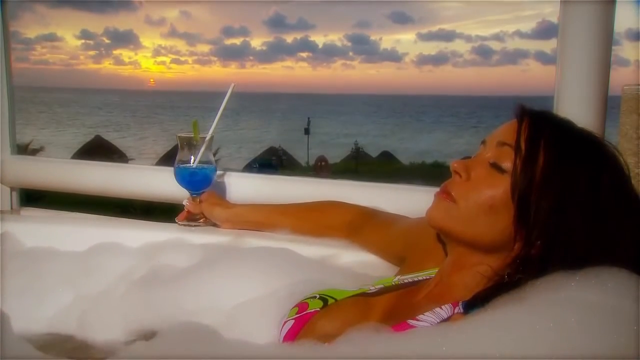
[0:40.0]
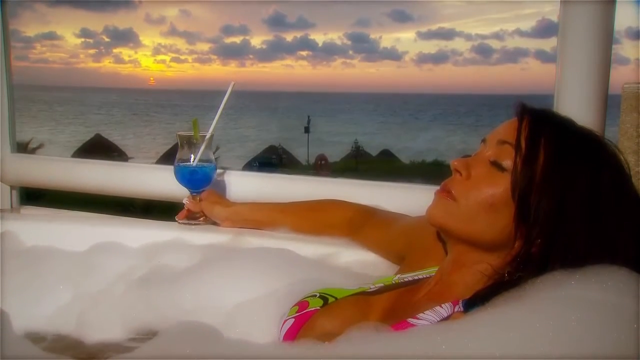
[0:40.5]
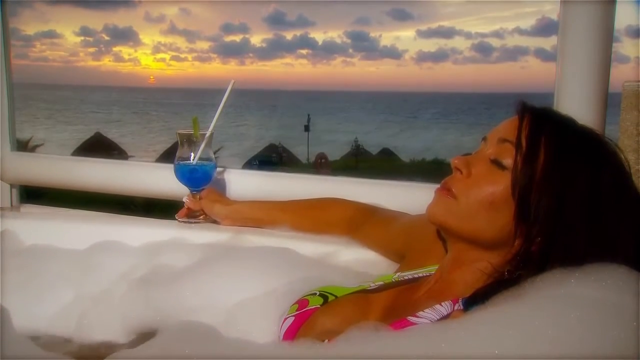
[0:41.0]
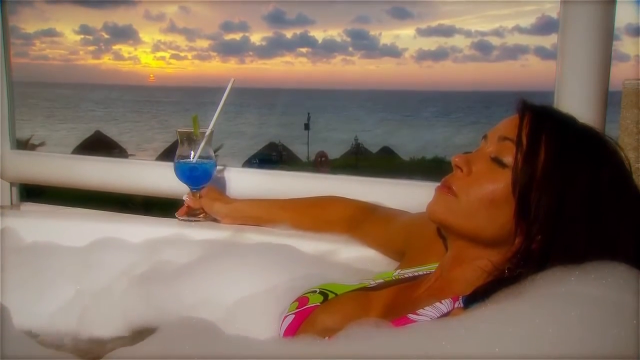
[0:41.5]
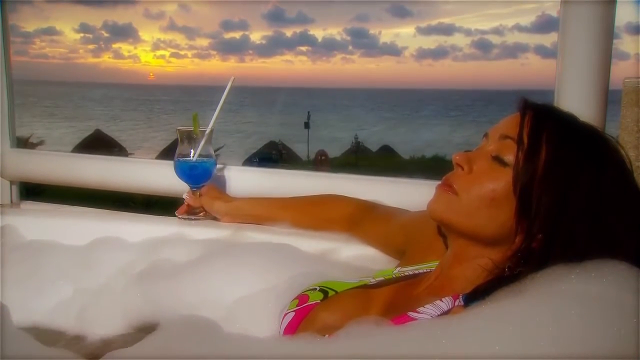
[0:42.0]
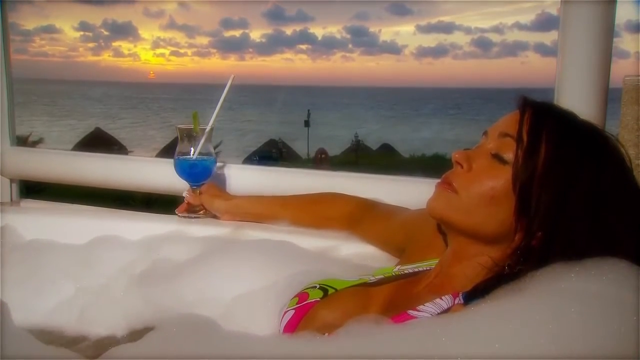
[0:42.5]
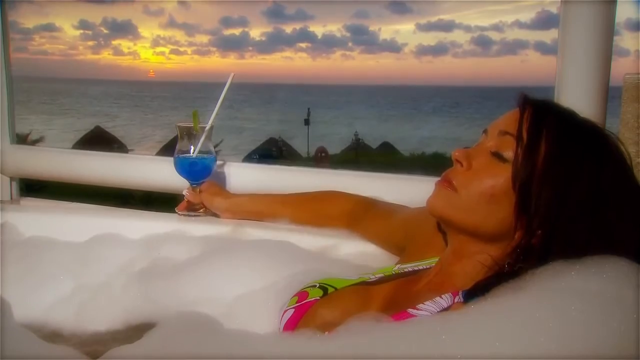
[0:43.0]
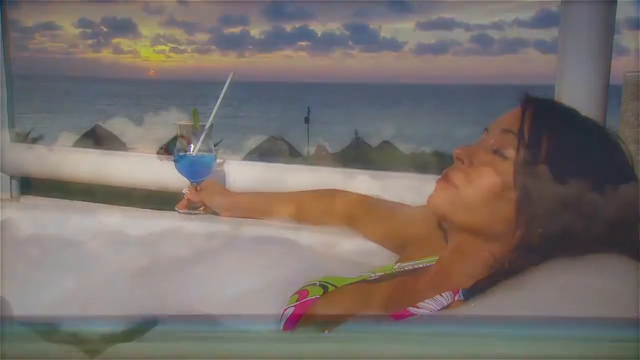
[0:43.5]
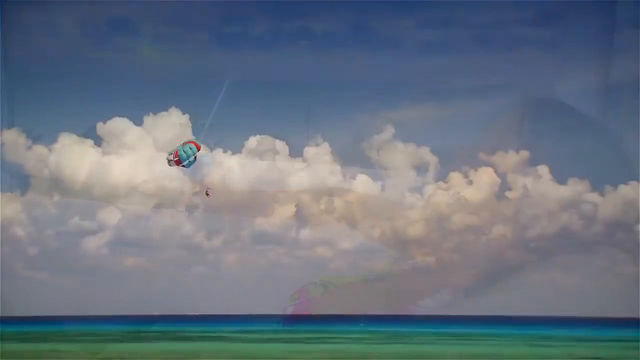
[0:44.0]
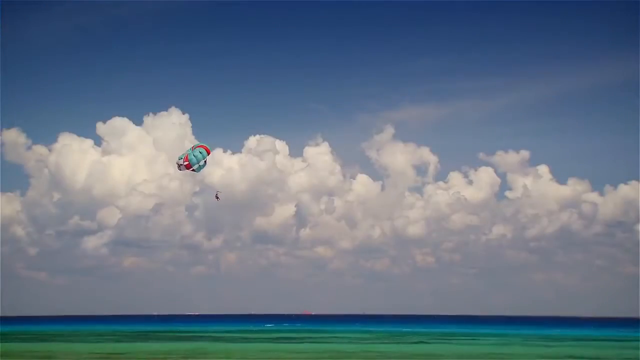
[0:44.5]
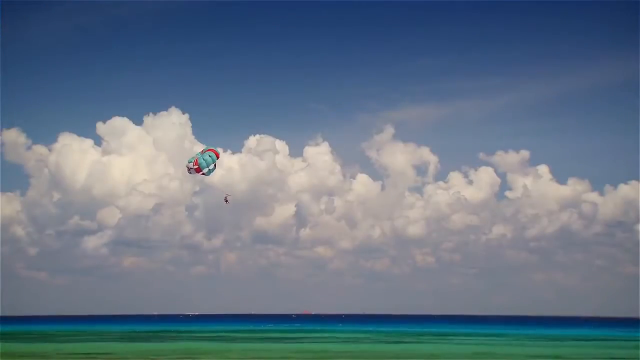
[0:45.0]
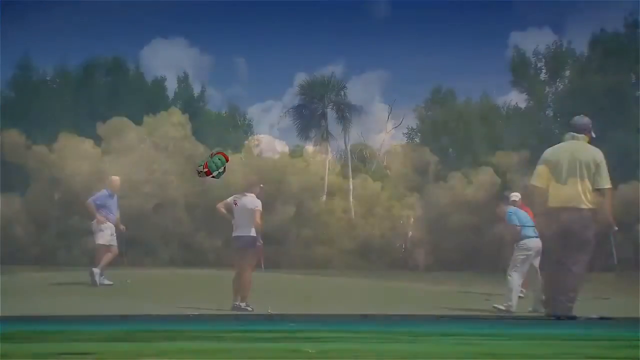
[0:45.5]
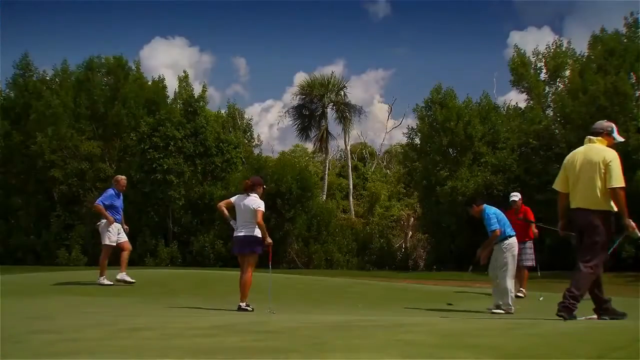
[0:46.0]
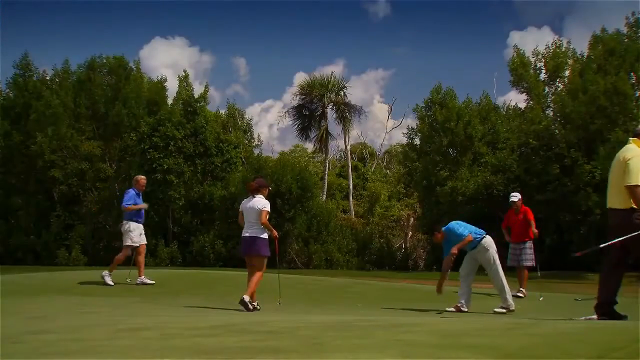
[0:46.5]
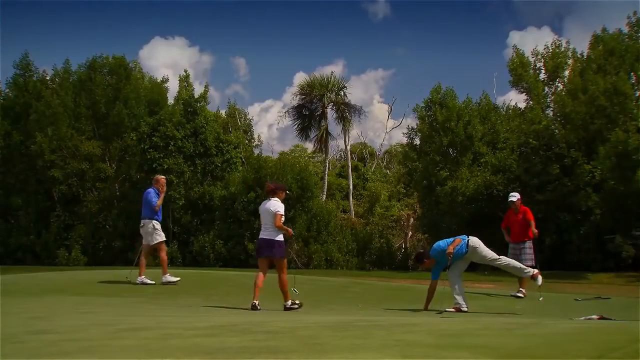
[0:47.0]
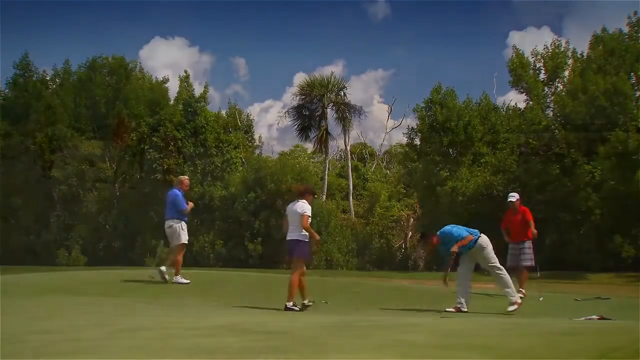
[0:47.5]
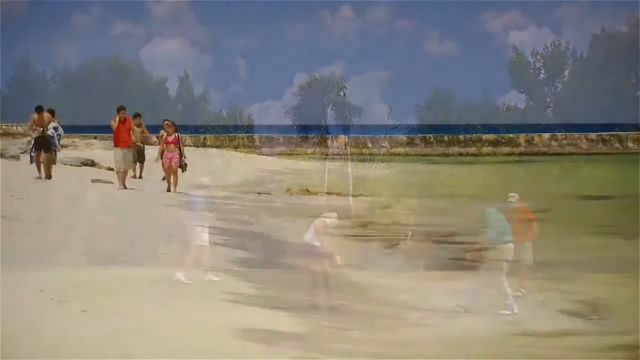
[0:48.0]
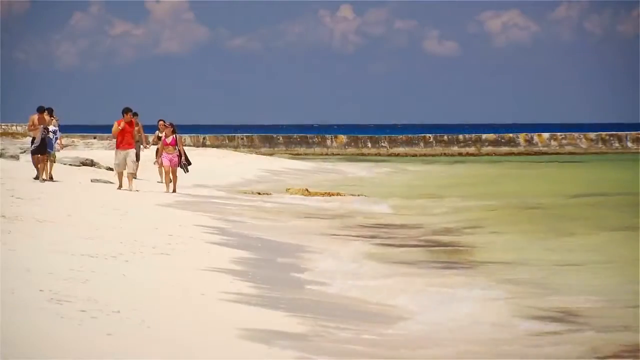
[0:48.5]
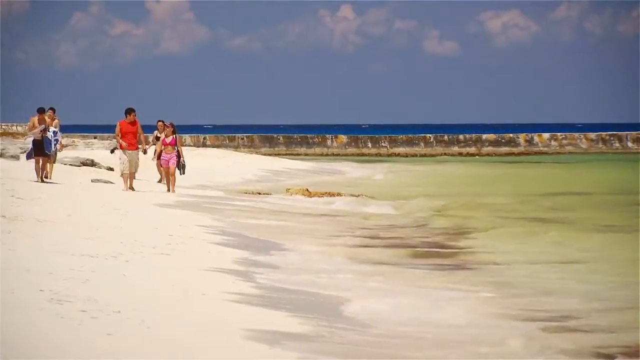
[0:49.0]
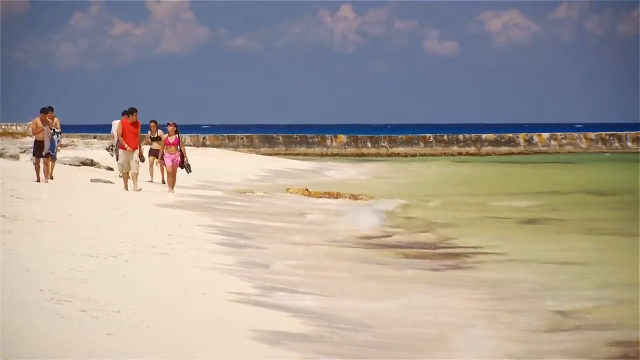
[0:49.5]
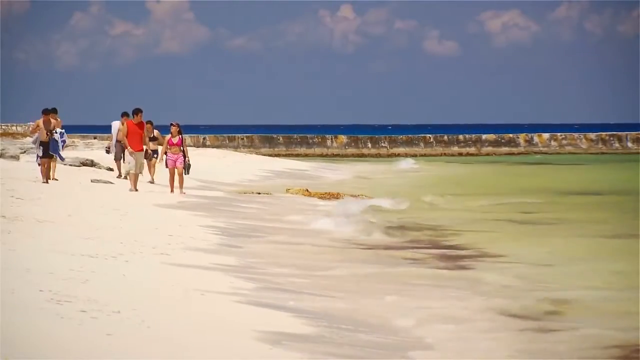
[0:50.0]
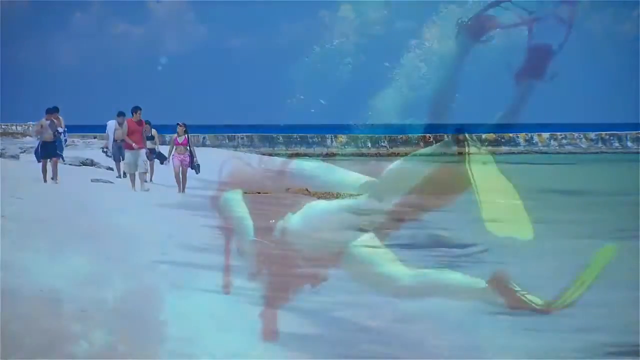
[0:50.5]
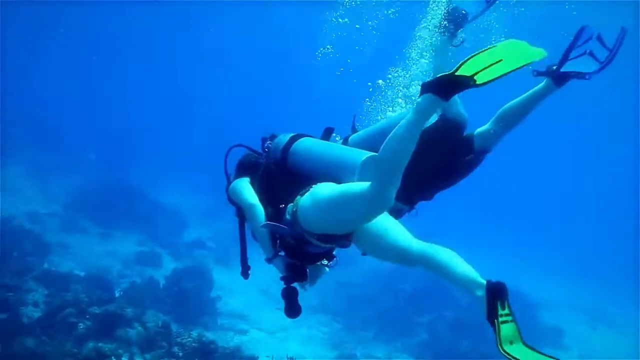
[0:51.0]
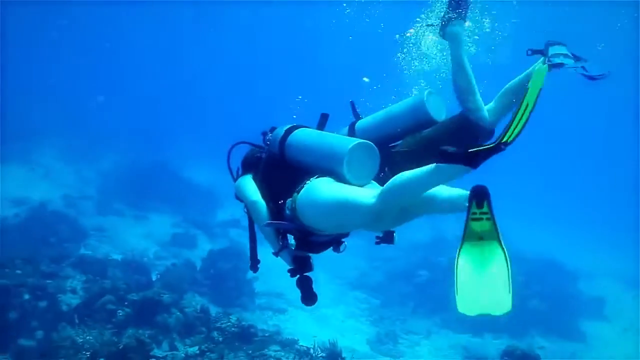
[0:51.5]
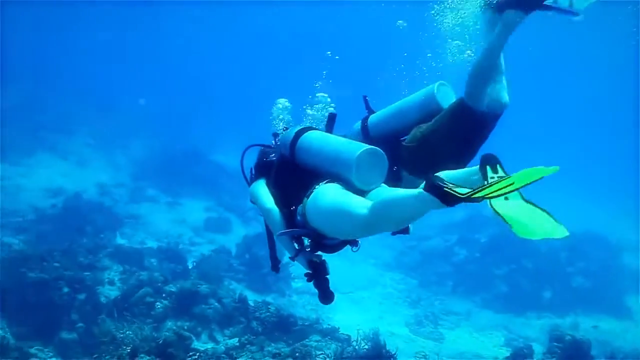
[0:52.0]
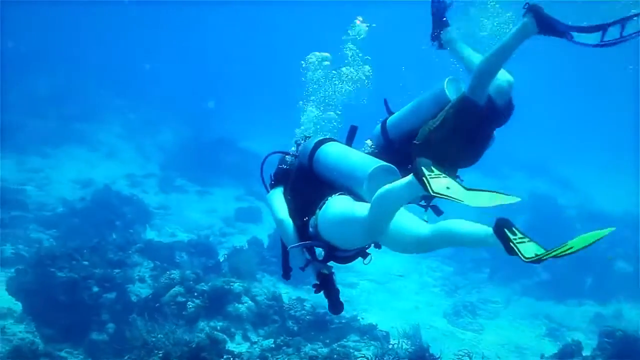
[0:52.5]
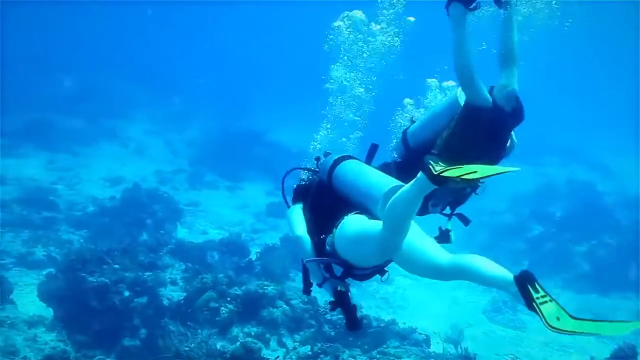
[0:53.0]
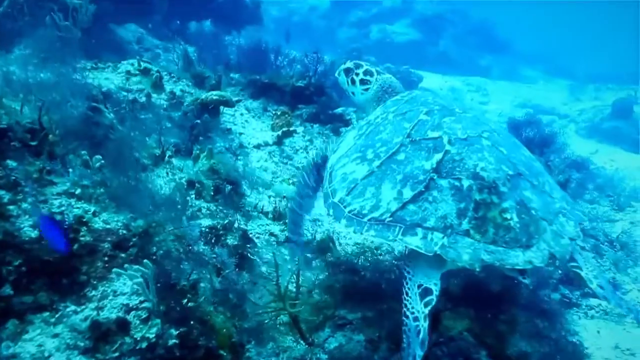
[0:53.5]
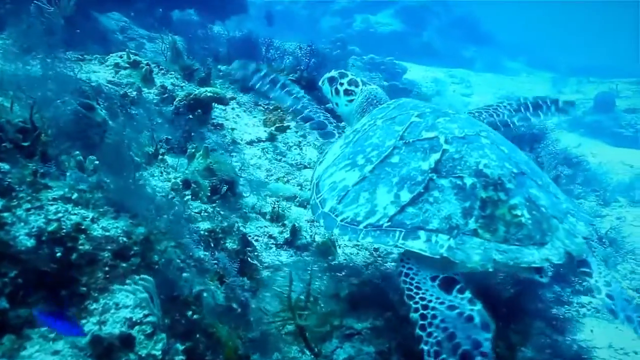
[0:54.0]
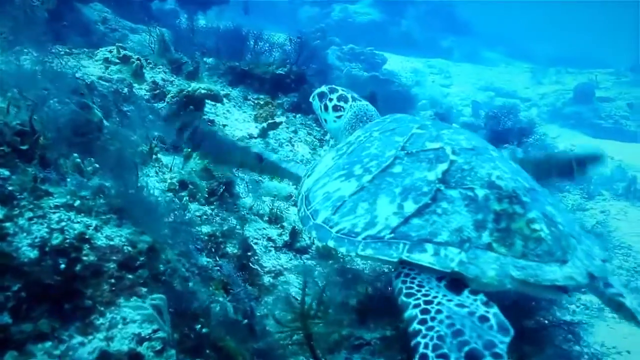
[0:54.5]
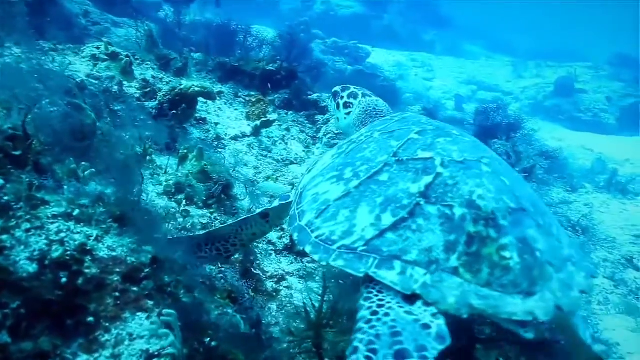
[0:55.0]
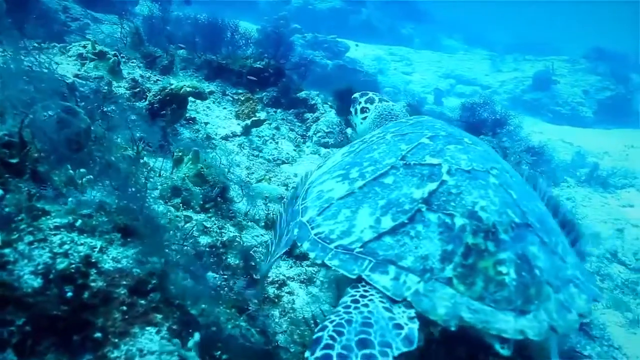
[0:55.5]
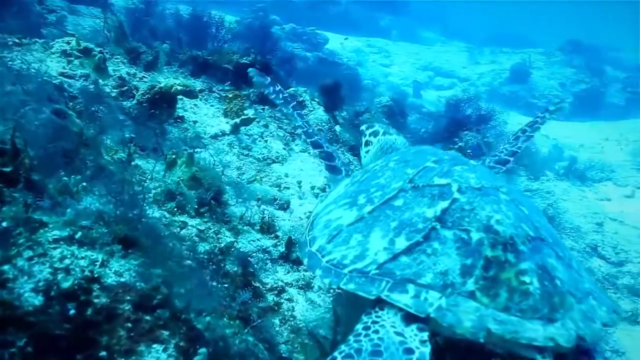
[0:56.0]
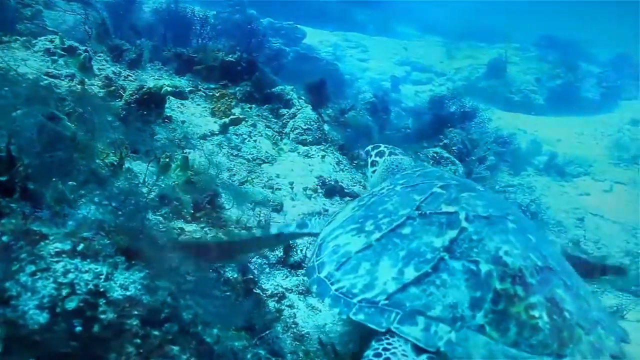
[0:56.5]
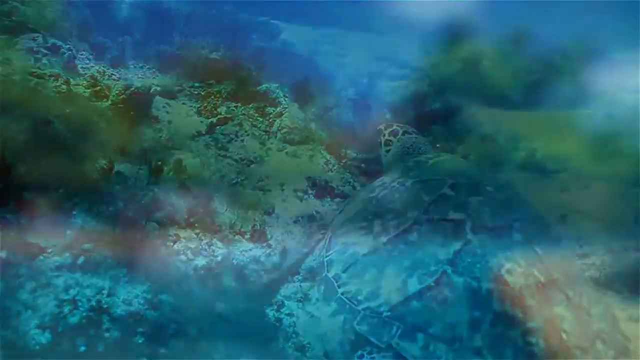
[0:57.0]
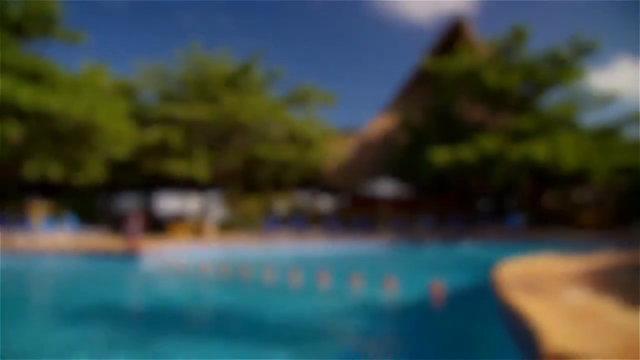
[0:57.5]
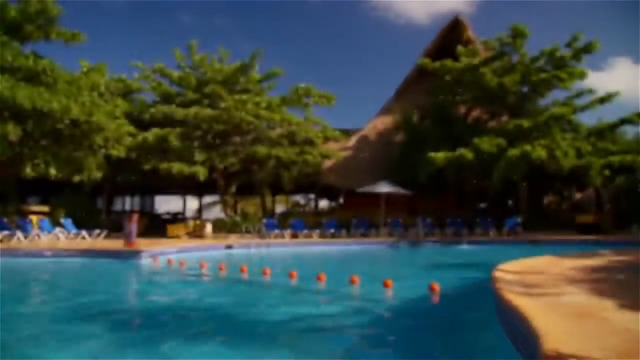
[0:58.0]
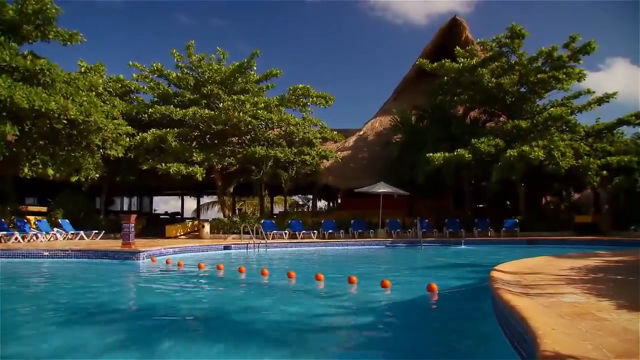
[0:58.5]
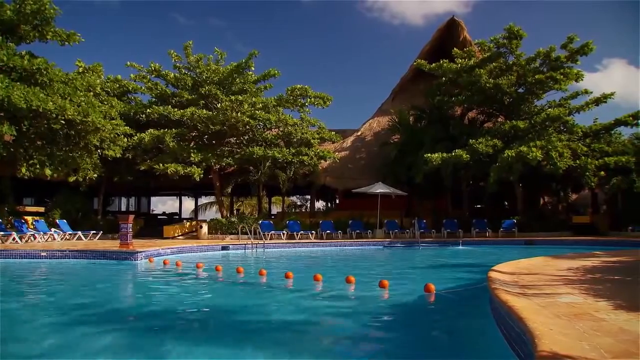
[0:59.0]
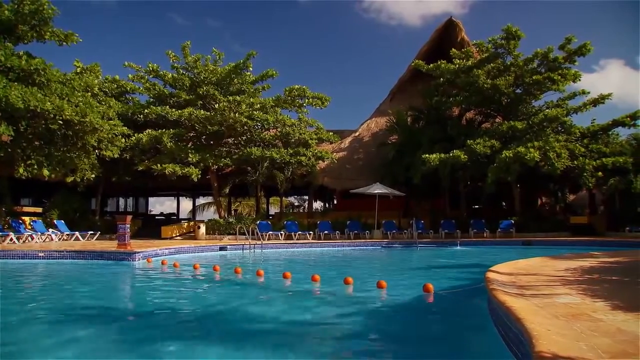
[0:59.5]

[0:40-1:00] The woman is still sitting in the bathtub, holding up the blue drink. The camera then shows a very wide view of some clouds, where there seems to be a person on a balloon floating. Next, five people, four men and one woman, all wearing golf attire, are on a golf course. A couple of people walk along the beach, a person scuba dives underwater, and the camera points toward a turtle under the water. Finally the camera pans out to the pool area, where a couple of orange circular objects run across the water, seemingly as a barrier. All of these scenes are set on a bright, sunny day and apparently detail the amenities the hotel resort offers its members.